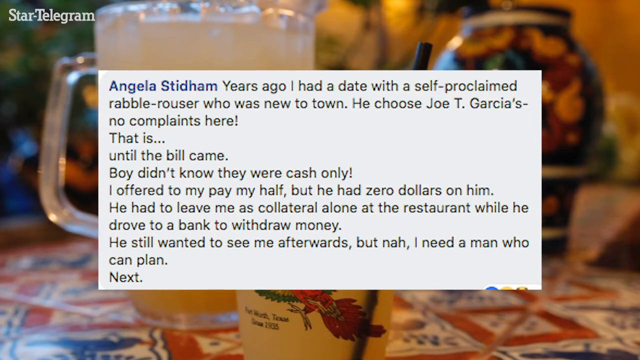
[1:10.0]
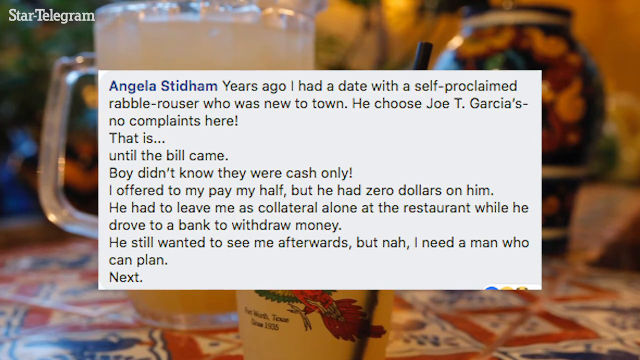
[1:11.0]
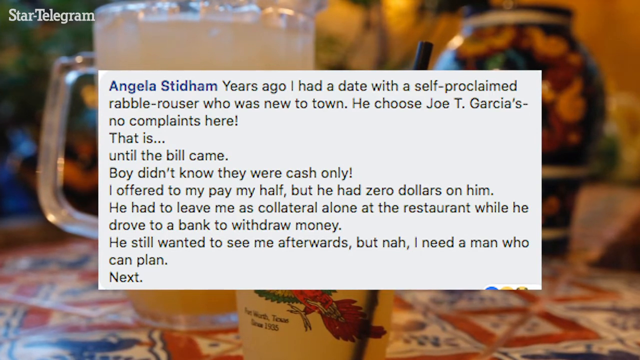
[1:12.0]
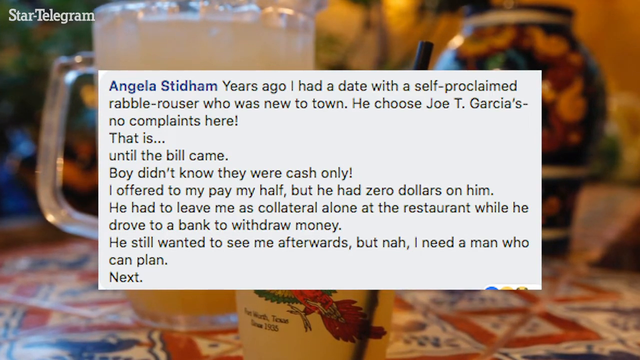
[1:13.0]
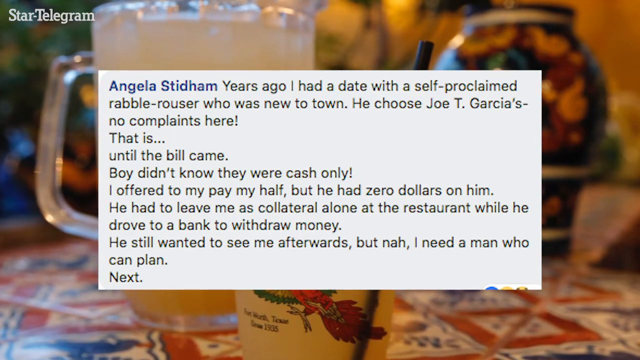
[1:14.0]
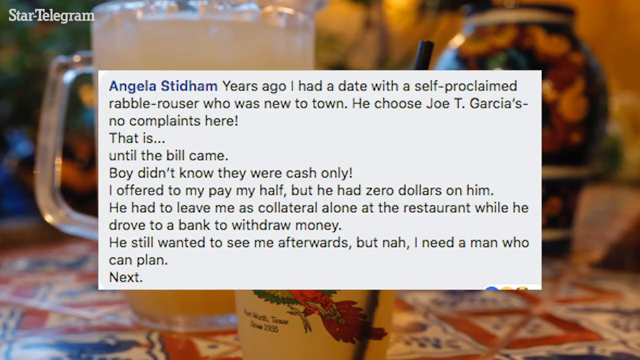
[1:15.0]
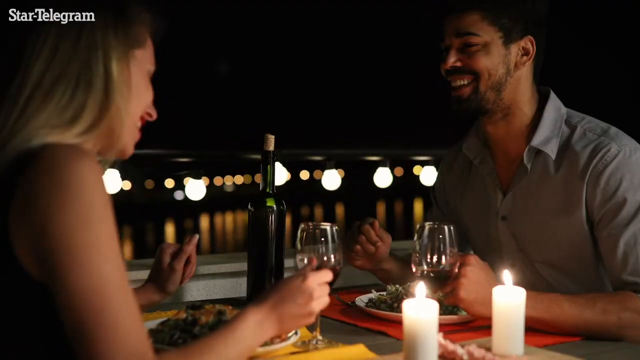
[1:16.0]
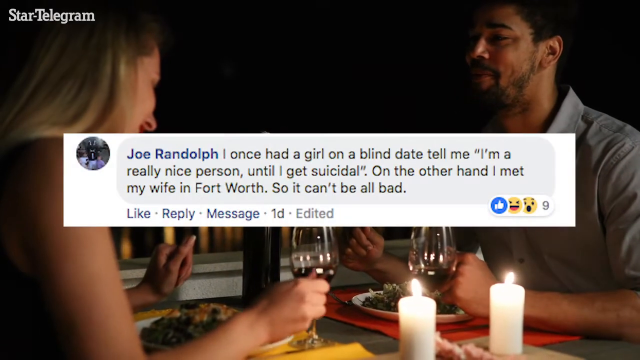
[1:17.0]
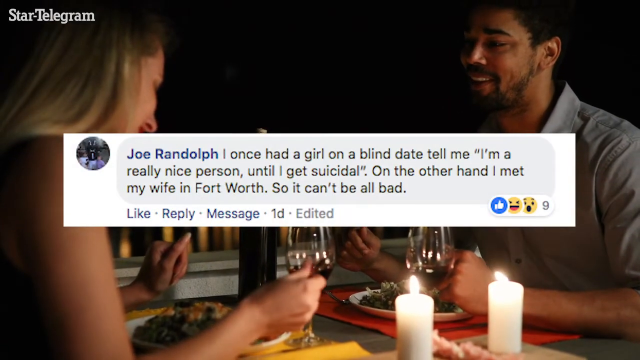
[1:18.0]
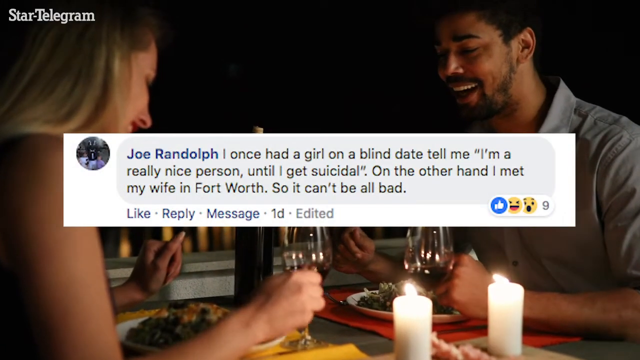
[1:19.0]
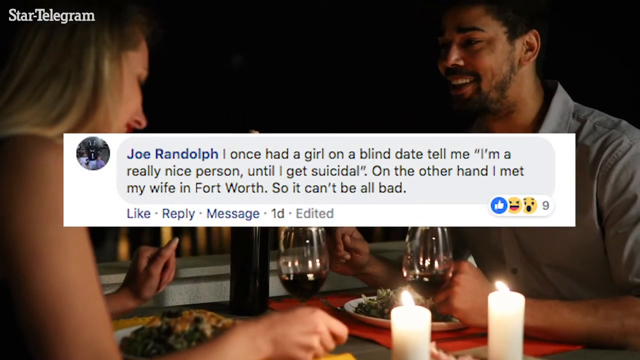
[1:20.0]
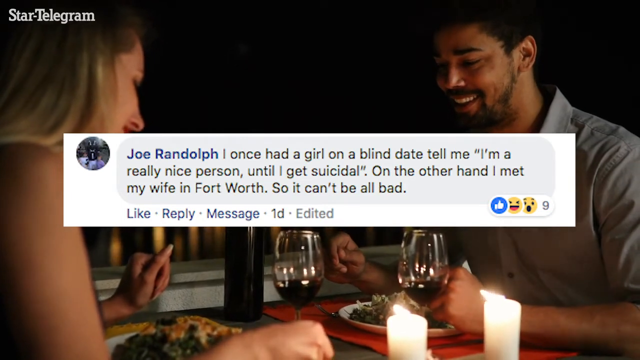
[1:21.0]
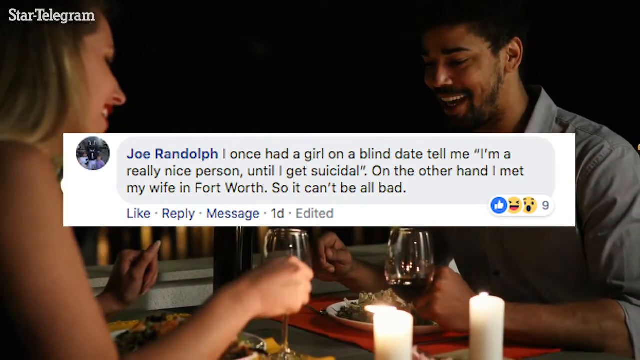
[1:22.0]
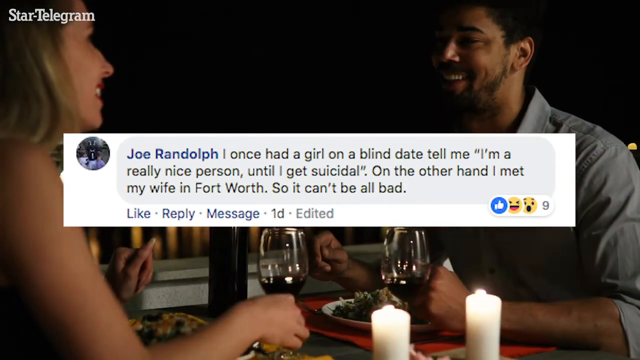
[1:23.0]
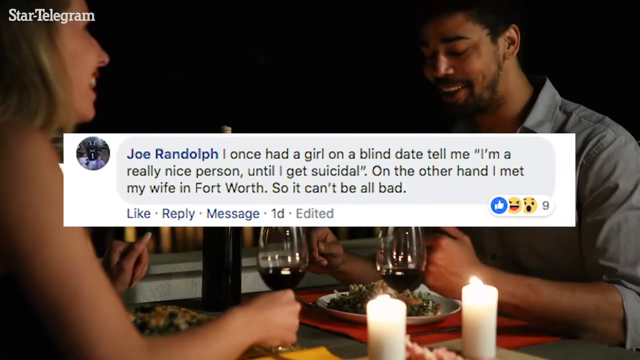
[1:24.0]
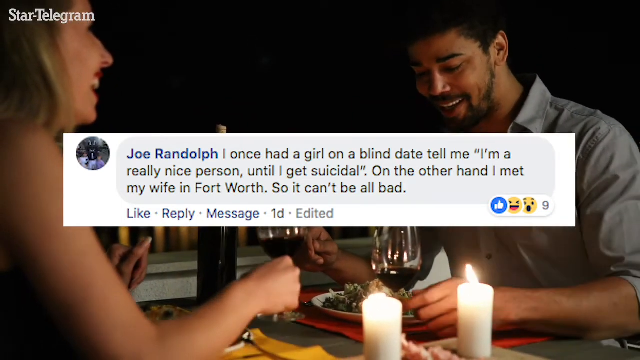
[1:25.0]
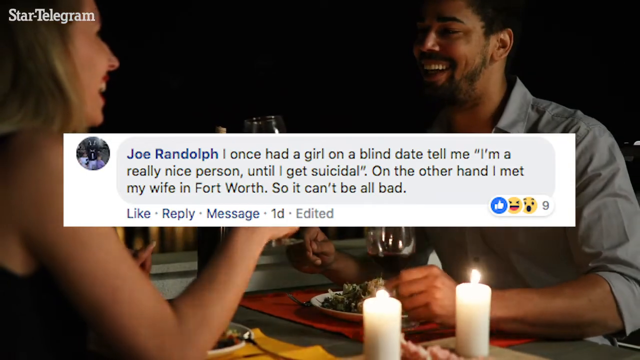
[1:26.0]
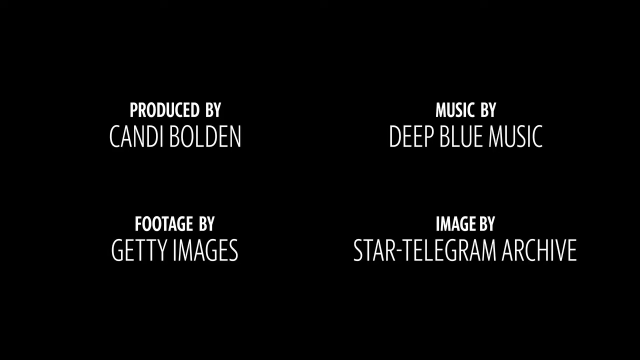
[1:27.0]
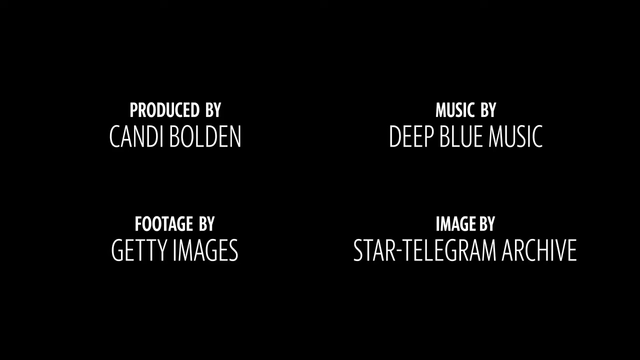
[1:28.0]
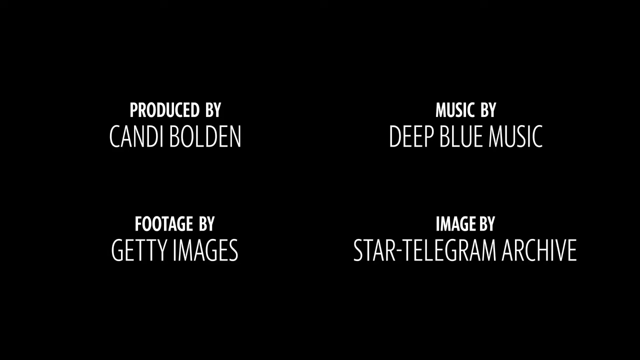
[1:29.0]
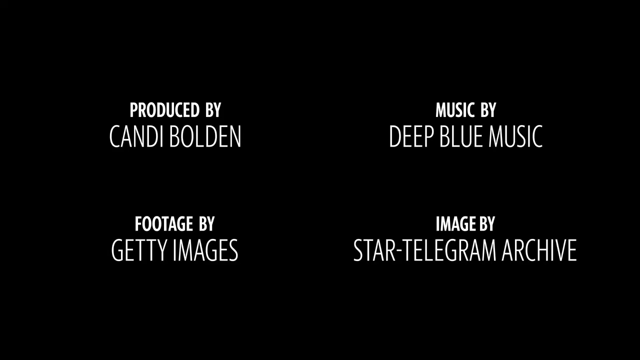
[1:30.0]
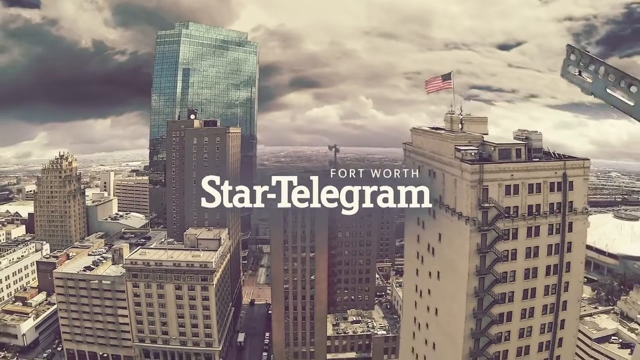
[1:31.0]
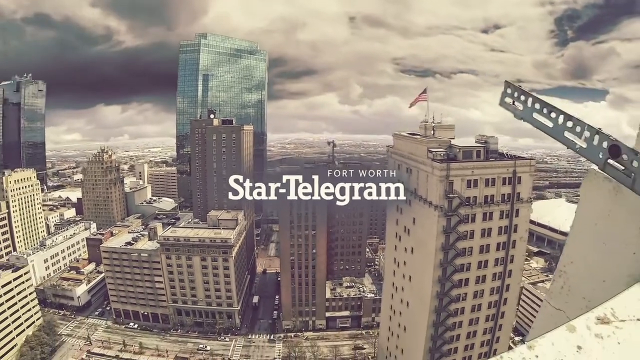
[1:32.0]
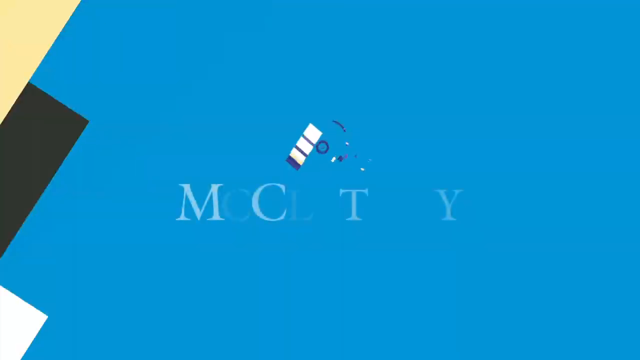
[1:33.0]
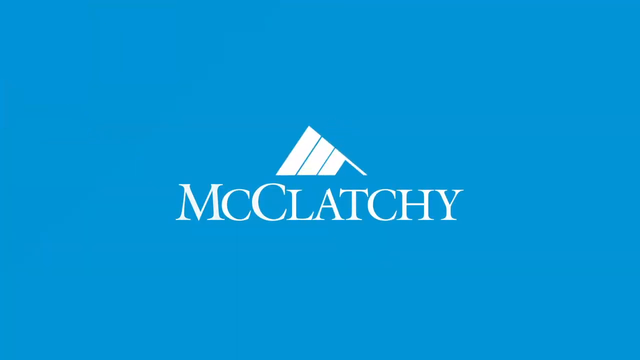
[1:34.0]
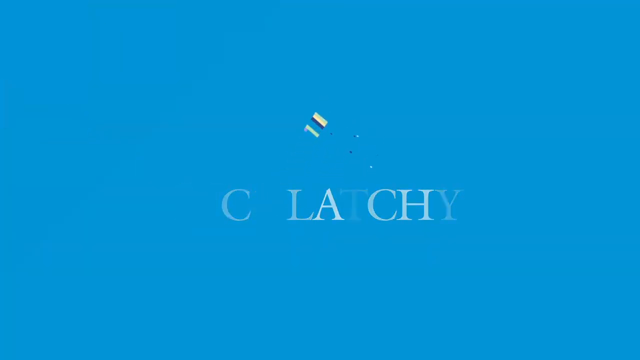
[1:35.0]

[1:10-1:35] A write-up is on screen, and at the bottom of it are a cup with fluid inside, a flowered mug, and a vase, all on a flowered napkin. Next, a video shows a couple on a dinner date; they are smiling and look really happy. There are two white candles on the table and two wine glasses, which the couple lift to make a toast. In front of the man is a white plate with a red napkin and food on it; in front of the woman is a white plate with a yellow napkin, also with food. The man wears a blue shirt and has black hair, and the woman has blonde hair. There are three lights beside them. The last shot shows skyscrapers like those seen in movies, mostly white in color.